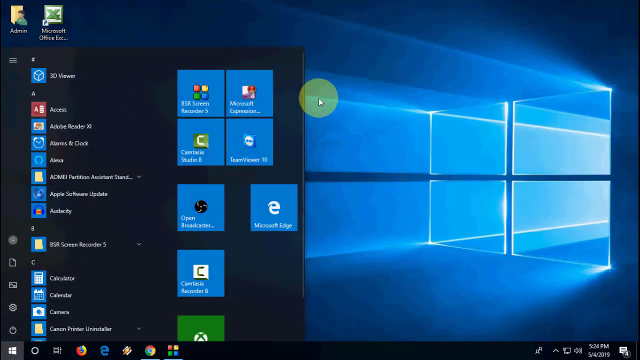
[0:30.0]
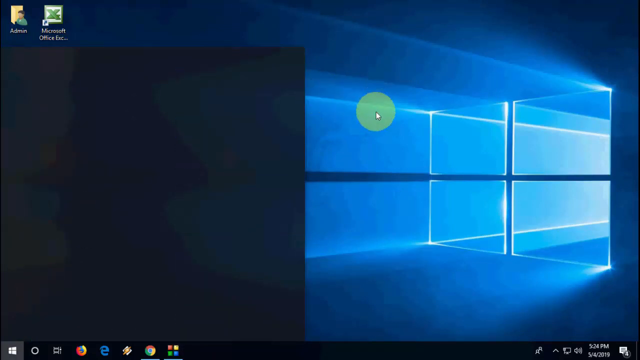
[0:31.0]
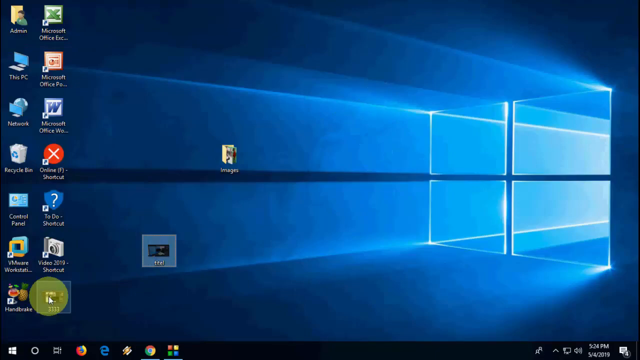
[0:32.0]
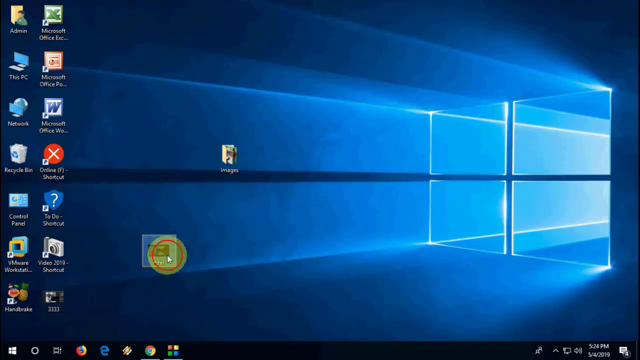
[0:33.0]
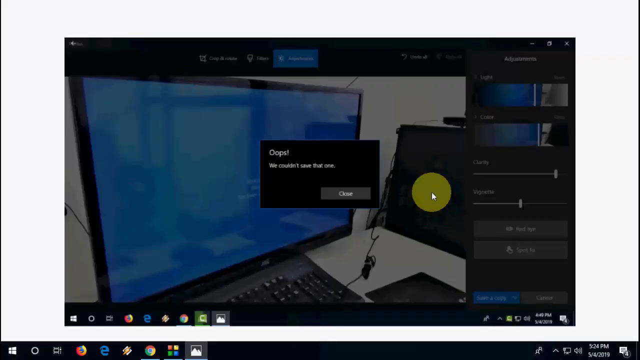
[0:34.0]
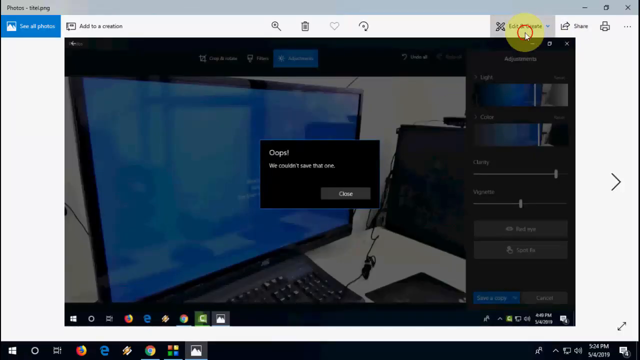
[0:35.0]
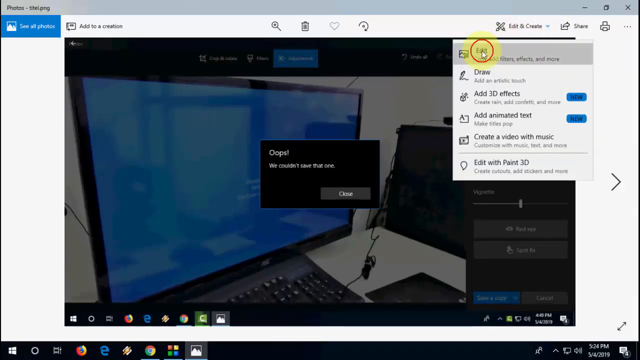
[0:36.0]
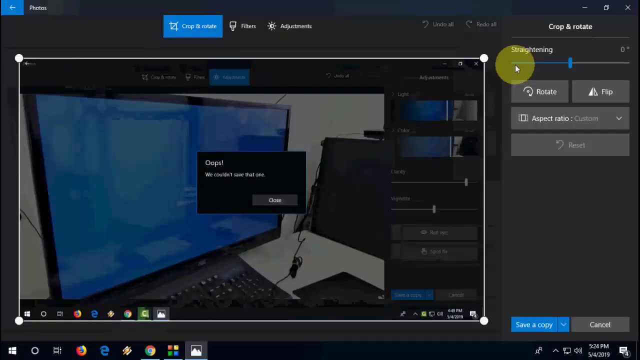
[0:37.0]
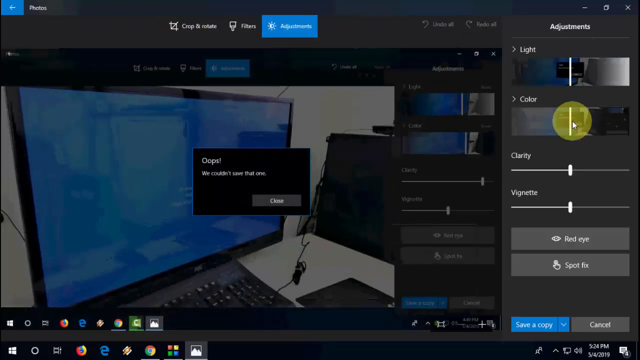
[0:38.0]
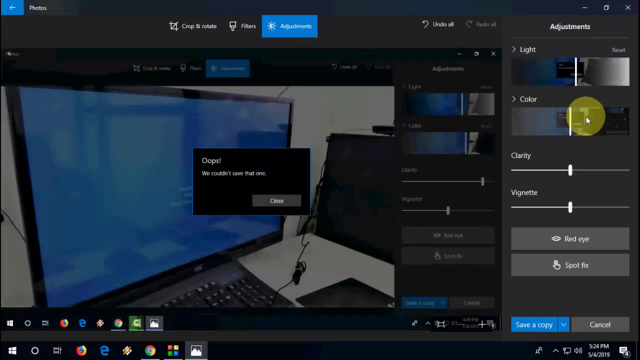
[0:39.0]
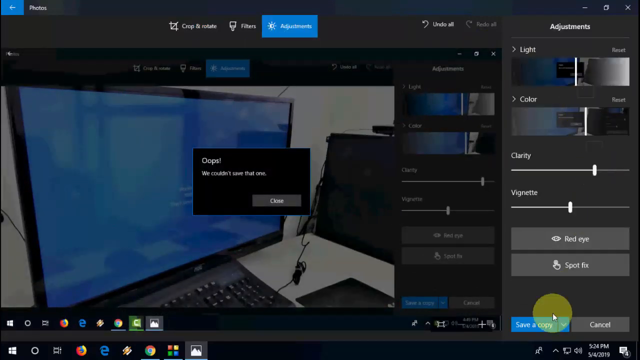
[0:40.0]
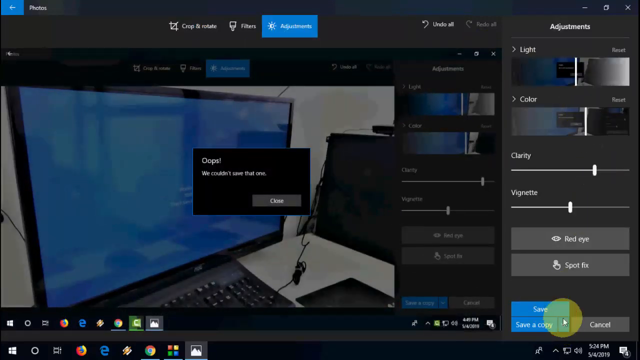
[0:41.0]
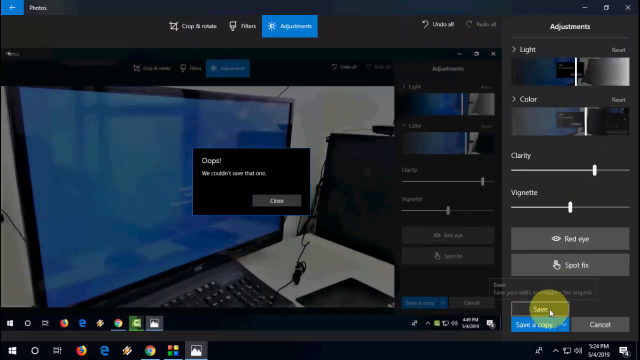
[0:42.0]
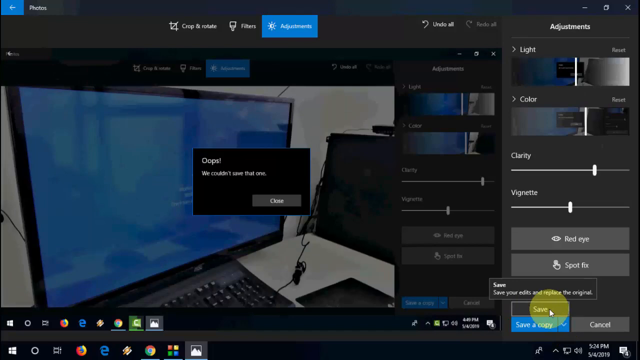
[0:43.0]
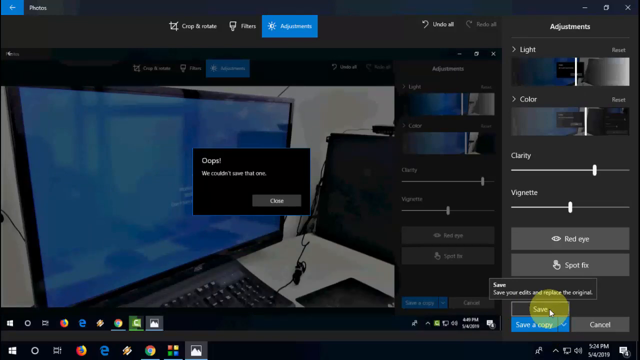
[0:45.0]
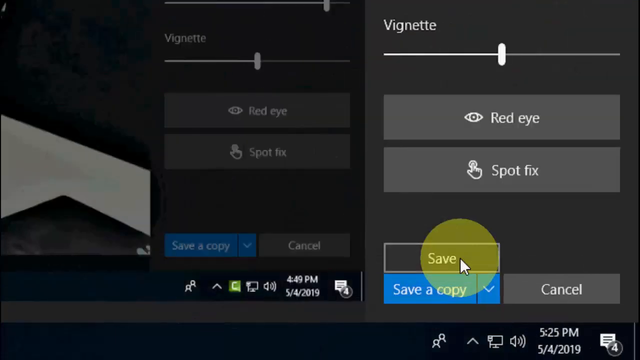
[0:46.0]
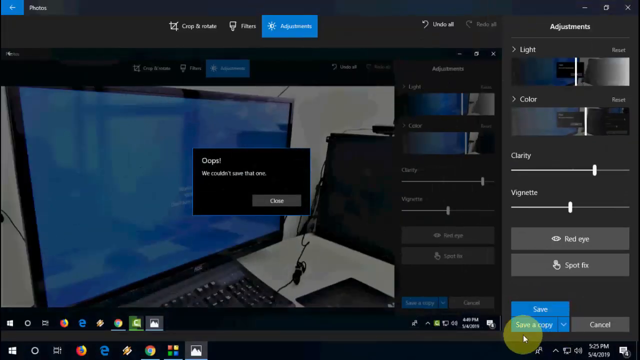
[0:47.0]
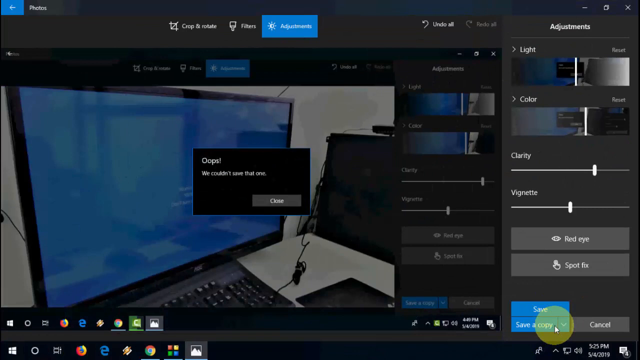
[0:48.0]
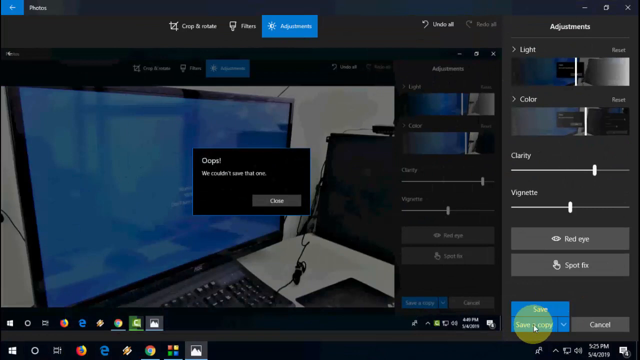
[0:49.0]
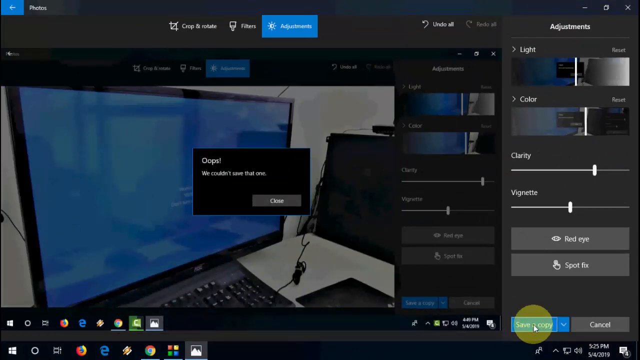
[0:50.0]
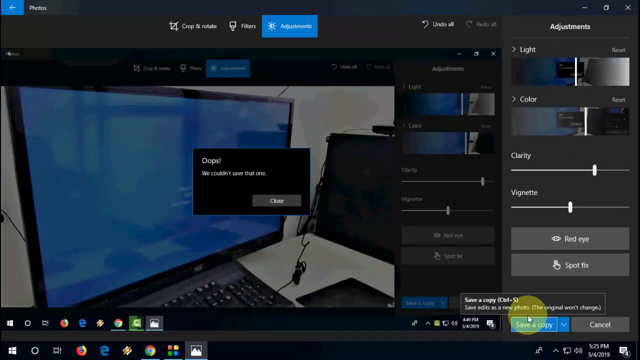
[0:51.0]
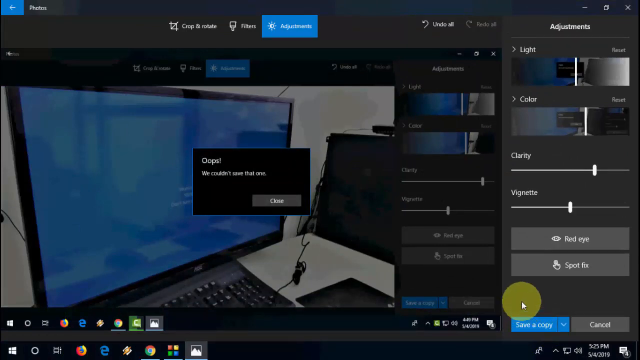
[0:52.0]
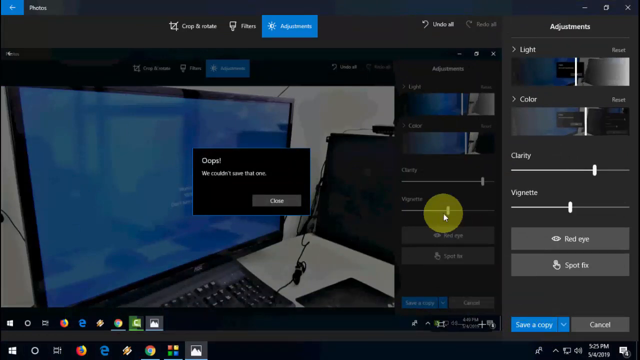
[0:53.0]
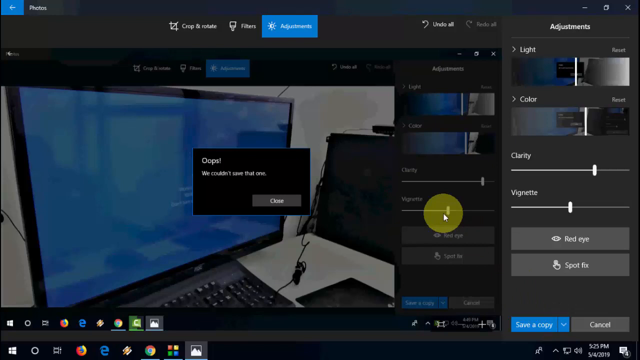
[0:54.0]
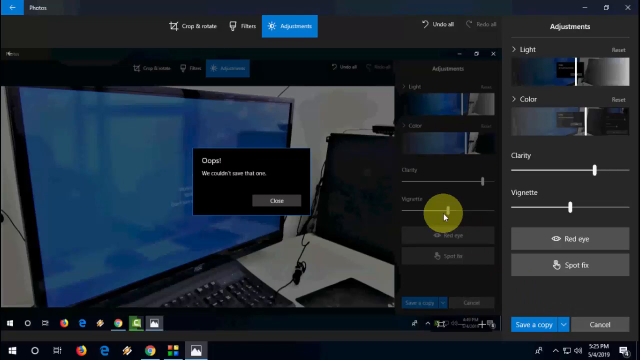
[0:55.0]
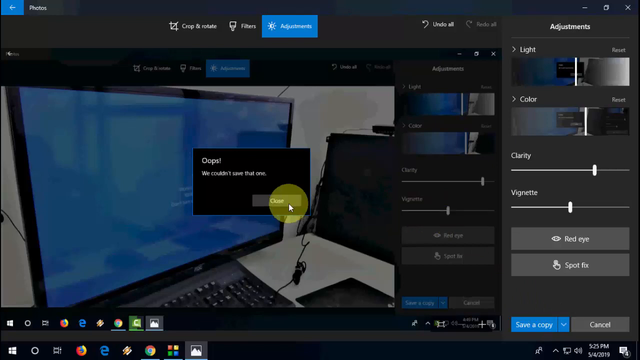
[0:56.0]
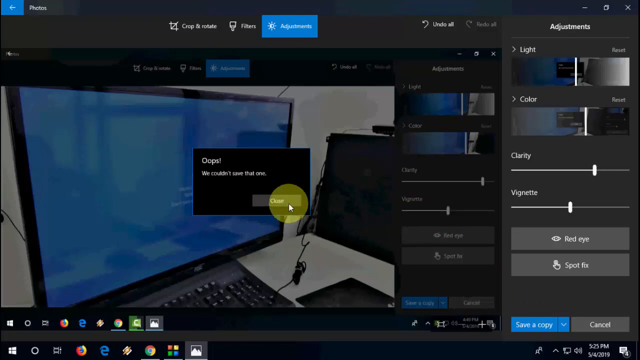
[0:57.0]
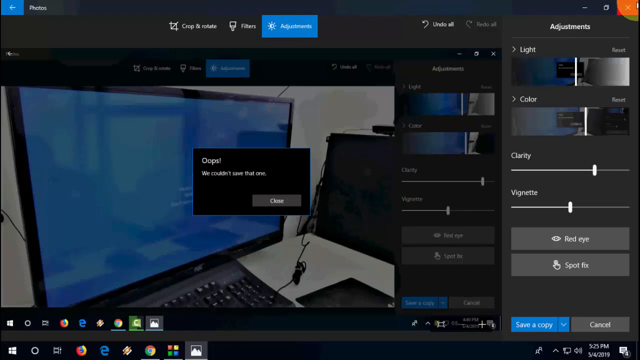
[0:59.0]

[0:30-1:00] The user presses the Windows start button and the start menu appears on the left side. The user closes it and double-clicks a photo on the desktop, which opens in the Photos application. The user moves to the top right and clicks the edit & create drop-down menu, which lists edit, draw, add 3D effect, add animated text, create a video with music, and edit with Paint 3D. The user presses edit, and the edit options appear, with crop and rotate, filters and adjustments at the top. The user clicks adjustments, and the adjustment options appear on the right side: light, color, clarity, vignette, red eye and spot fix. The user adjusts the light to brighten the picture and adjusts the color to make it pop. The user then clicks the drop-down on the save button at the bottom right, which shows two options, save and save as copy, and saves the edited image by pressing save as copy. Finally the user moves to the top right and presses the close button to close the editor.